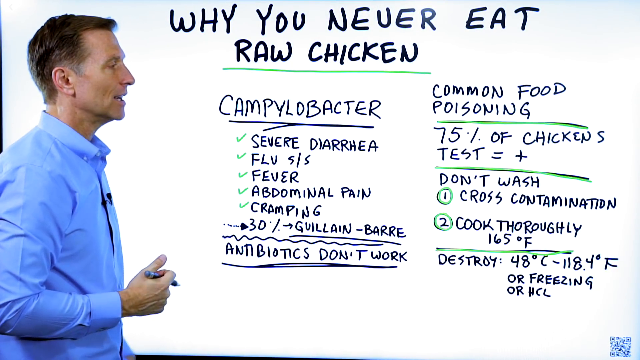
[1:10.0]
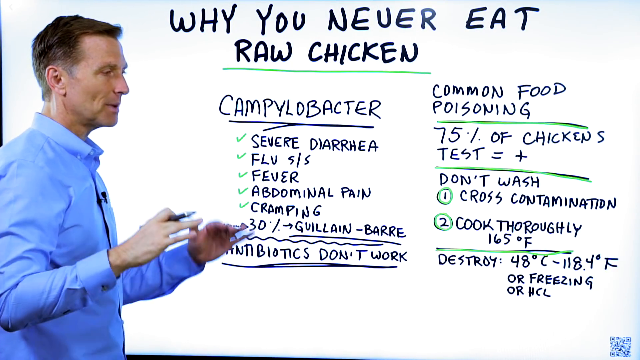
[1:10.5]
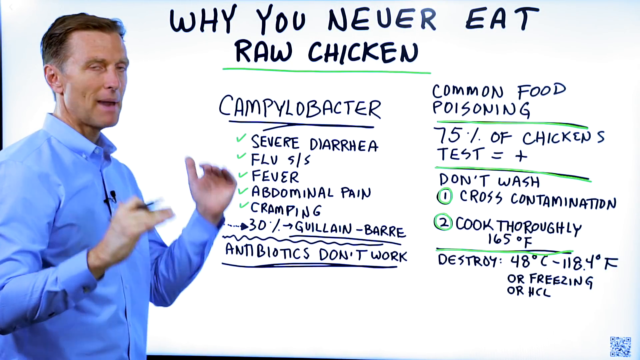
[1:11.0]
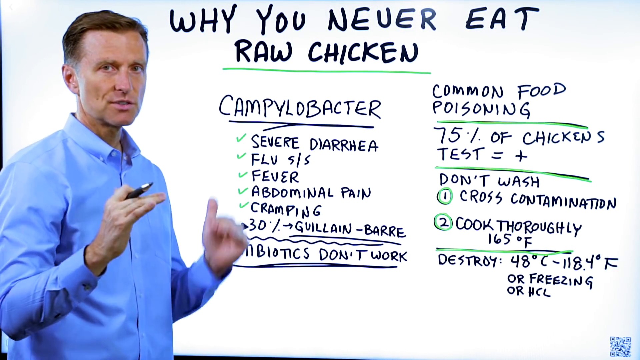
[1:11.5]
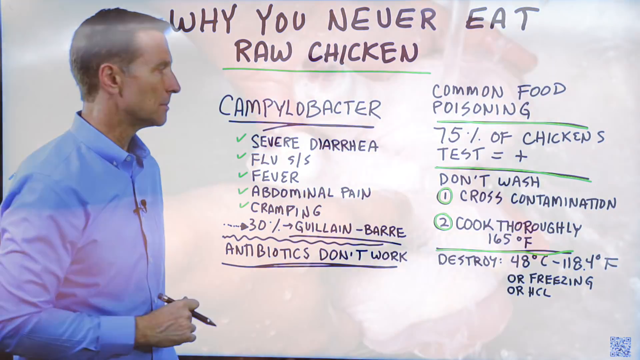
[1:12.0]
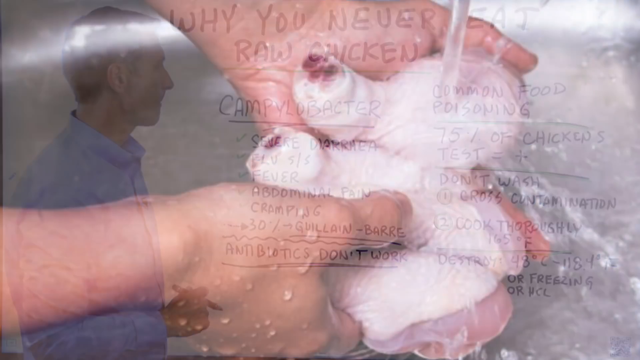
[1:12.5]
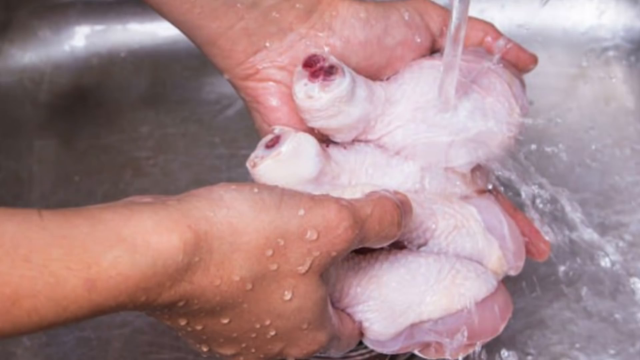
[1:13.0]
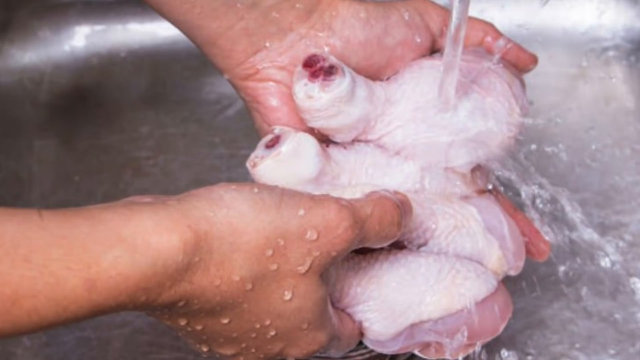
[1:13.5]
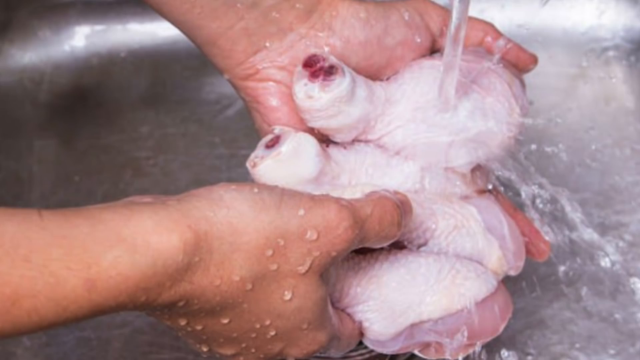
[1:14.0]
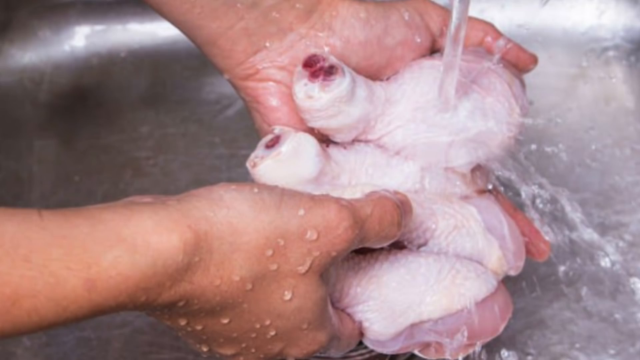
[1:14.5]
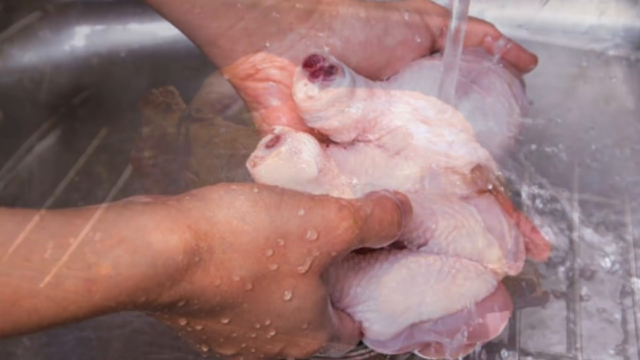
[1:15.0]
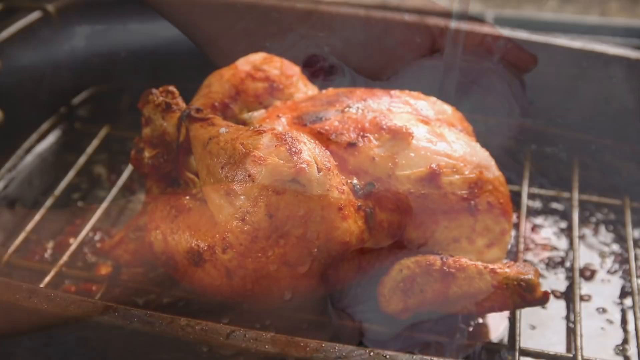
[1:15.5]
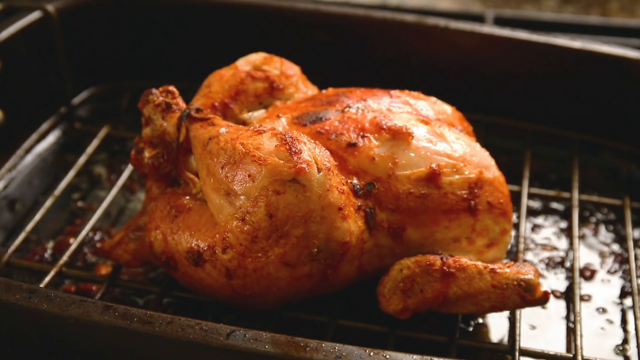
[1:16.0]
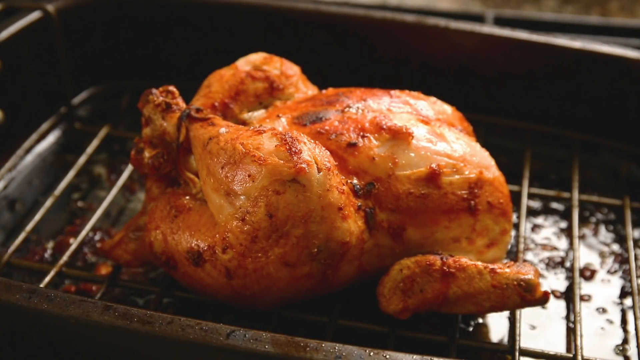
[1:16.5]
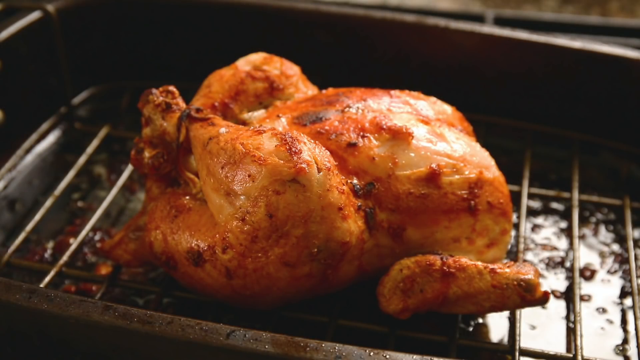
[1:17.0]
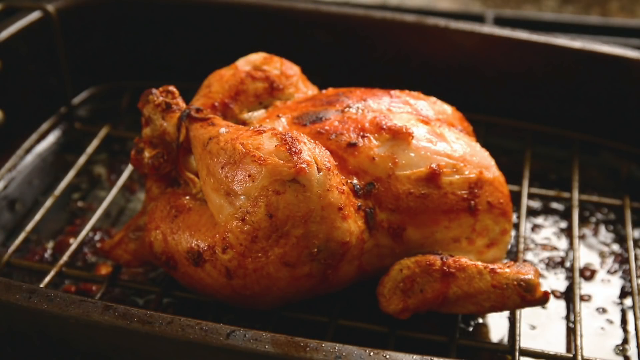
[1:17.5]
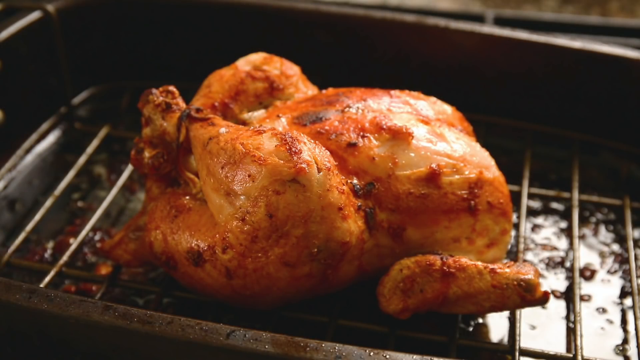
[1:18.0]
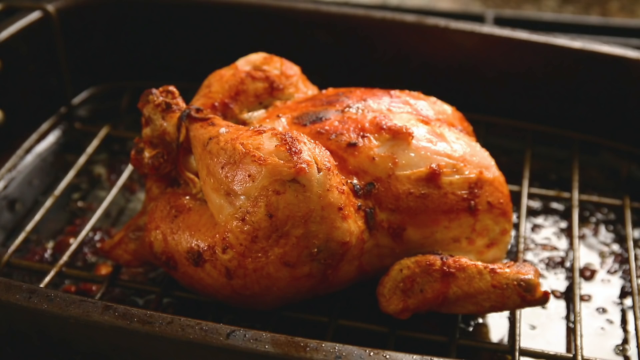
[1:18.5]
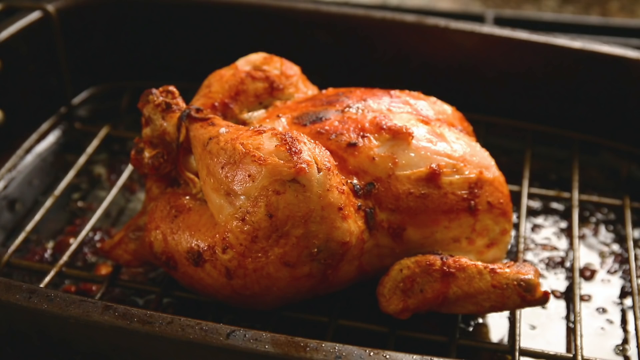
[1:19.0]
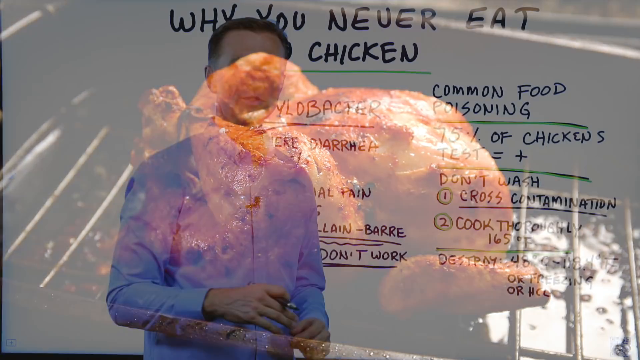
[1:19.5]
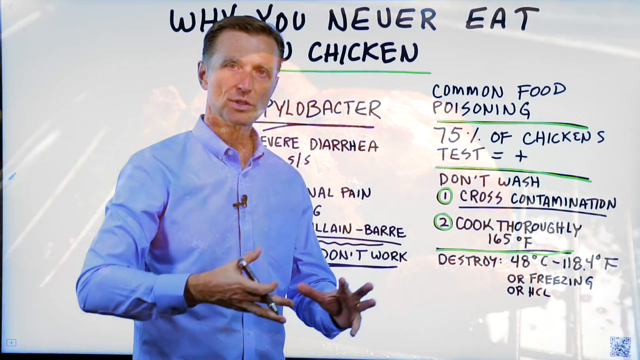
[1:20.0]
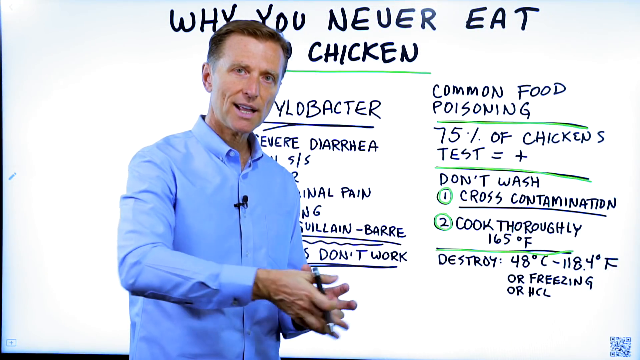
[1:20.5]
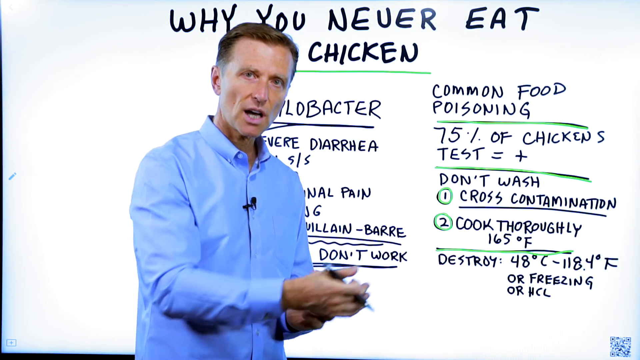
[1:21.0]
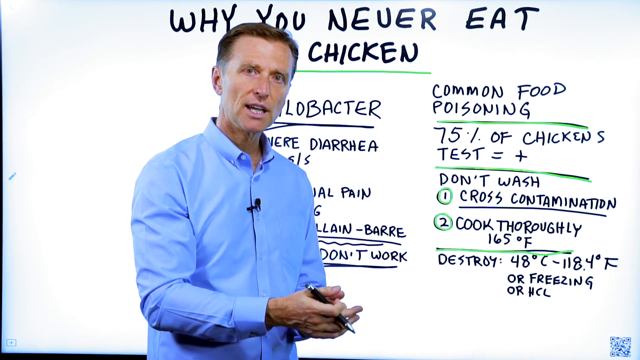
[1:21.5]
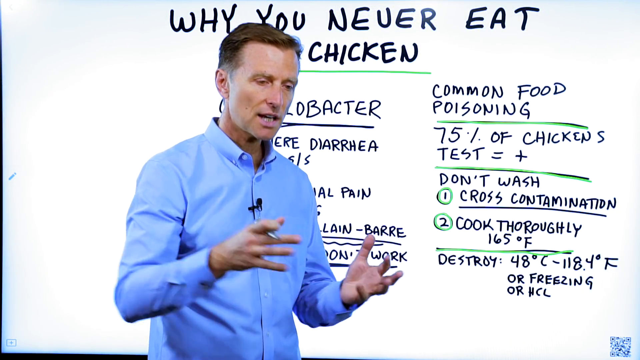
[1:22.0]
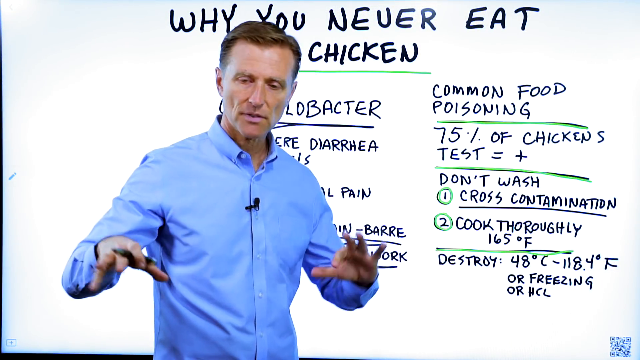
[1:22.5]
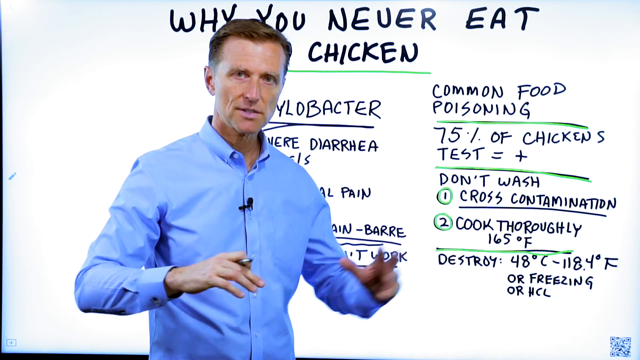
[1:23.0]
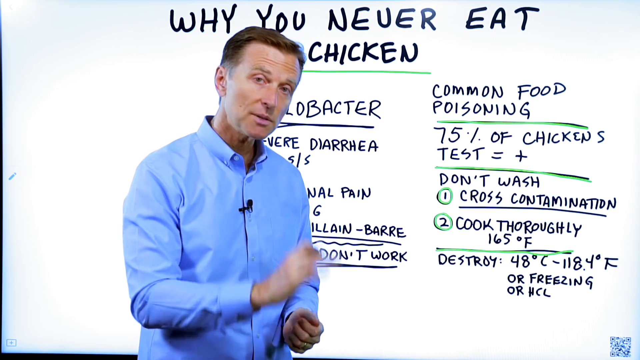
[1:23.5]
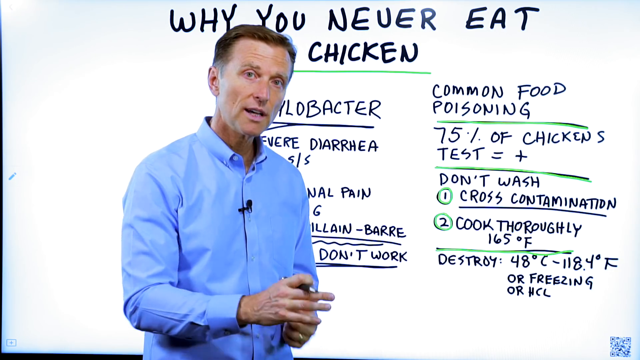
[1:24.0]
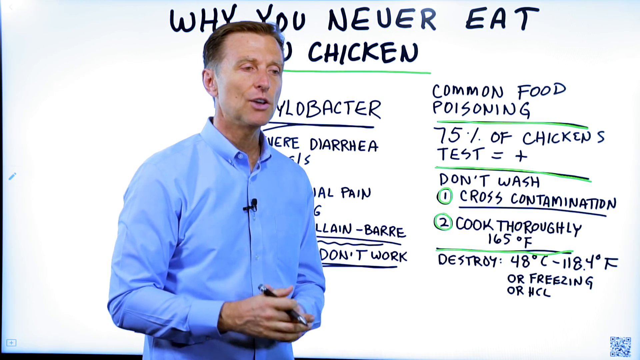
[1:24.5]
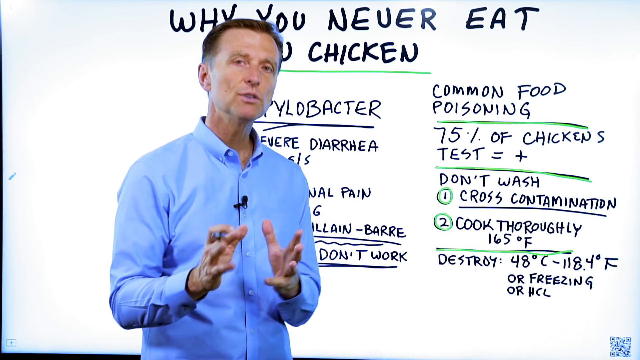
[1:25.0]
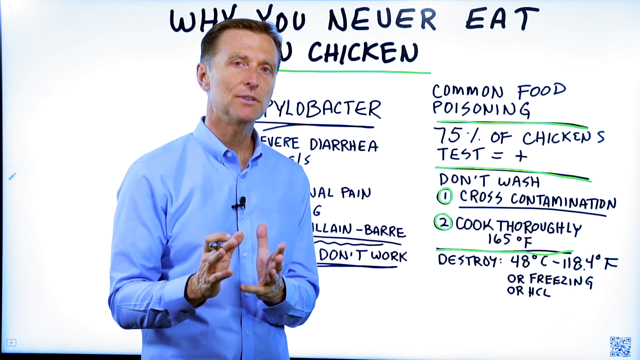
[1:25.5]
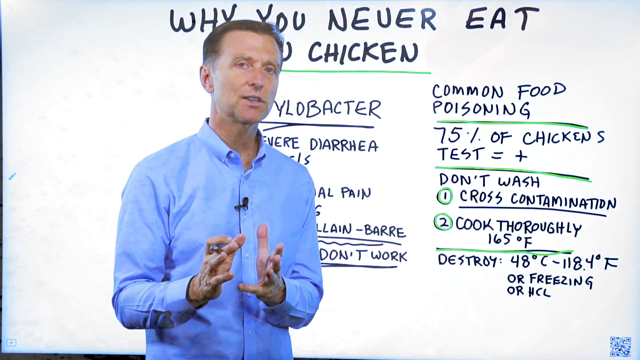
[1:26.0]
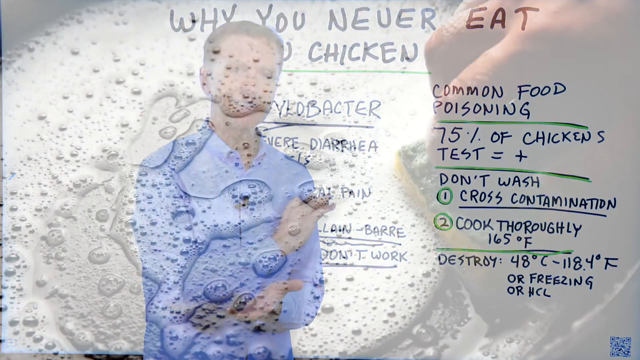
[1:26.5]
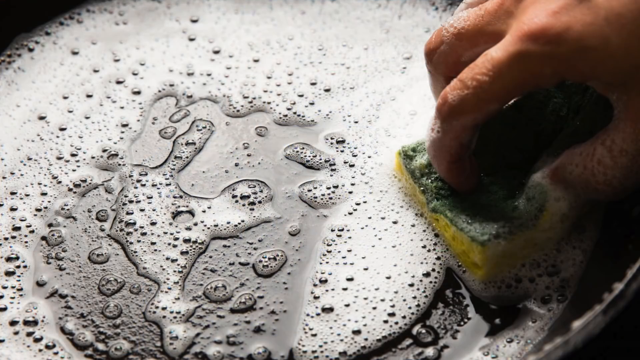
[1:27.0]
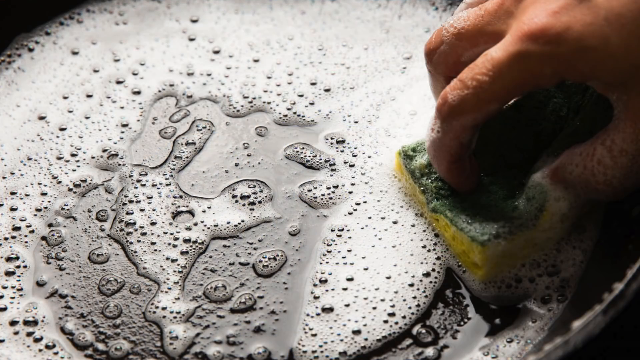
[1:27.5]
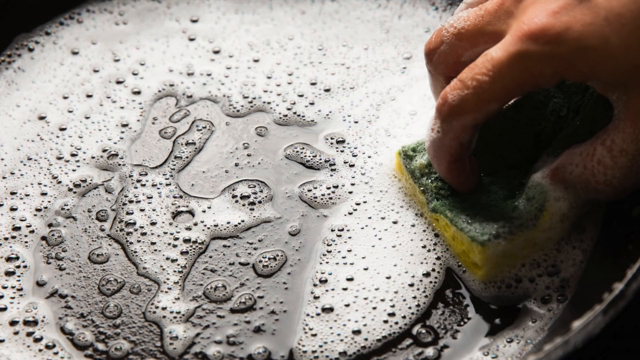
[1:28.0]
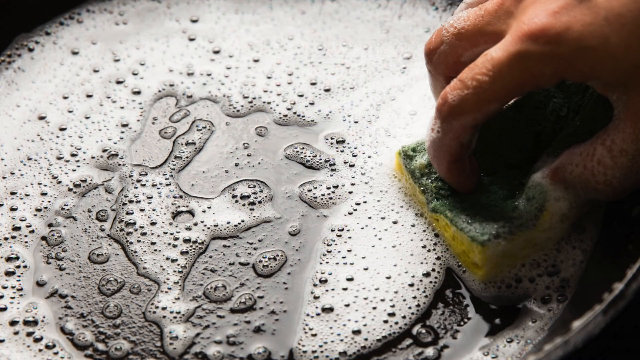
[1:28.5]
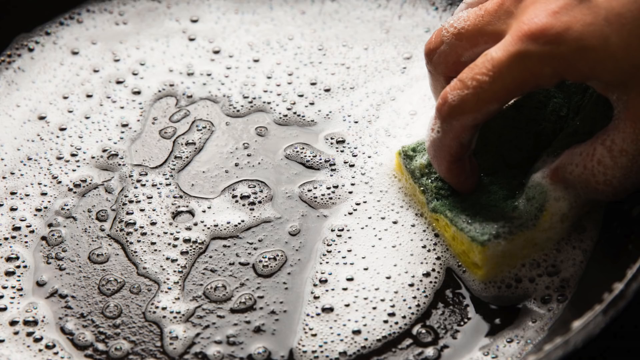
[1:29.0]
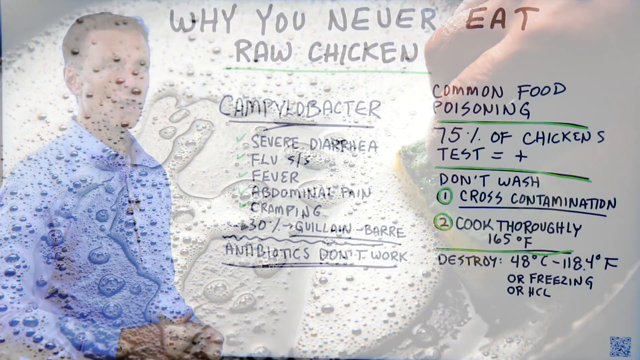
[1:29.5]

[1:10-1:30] A chicken is shown, and then a person washing a chicken. The washed chicken is shown in a picture, and then the chicken is shown cooked. The teacher is shown still teaching. Next, a picture shows a person's hand and water containing soap. Another picture shows a person's hands washing chicken thighs, and the cooked chicken is shown again.